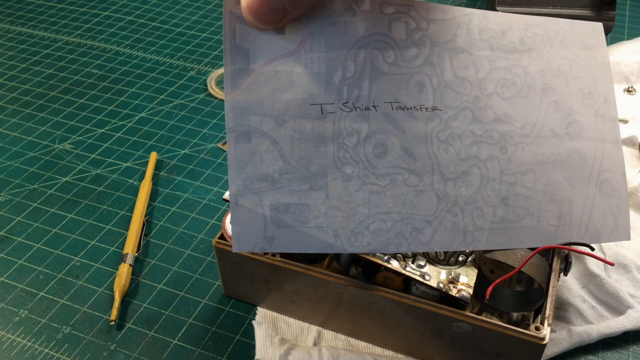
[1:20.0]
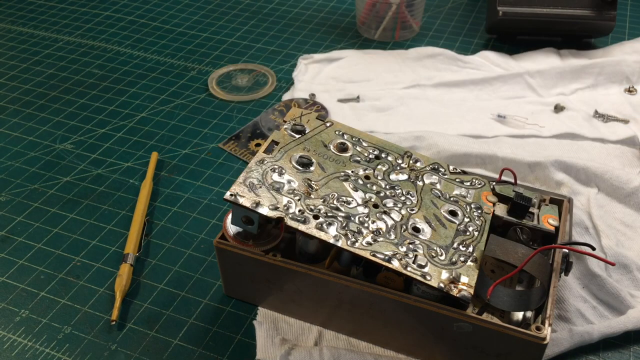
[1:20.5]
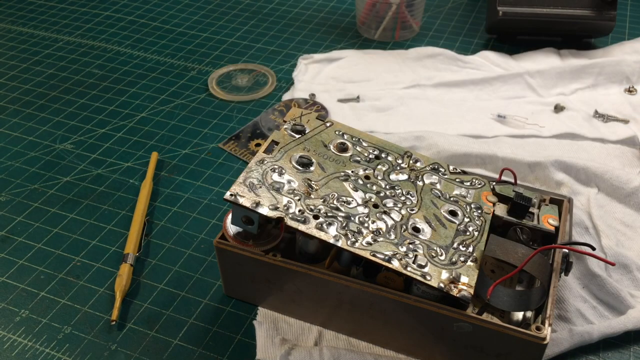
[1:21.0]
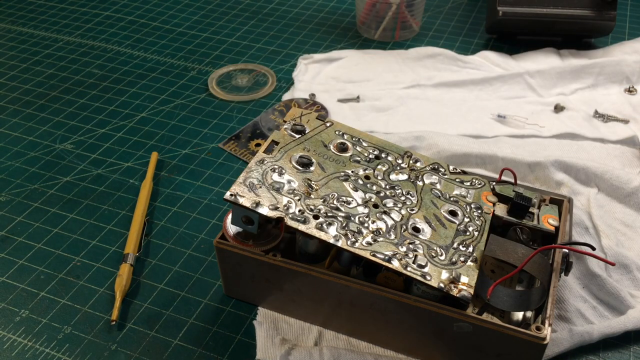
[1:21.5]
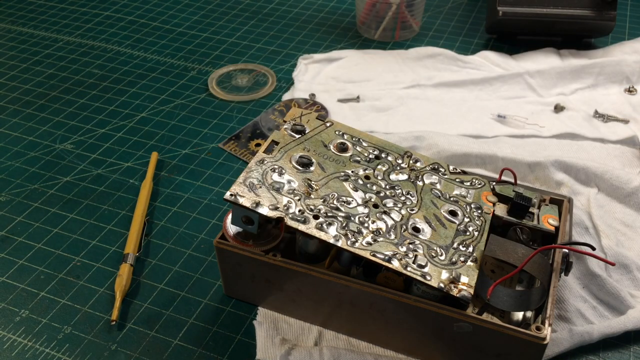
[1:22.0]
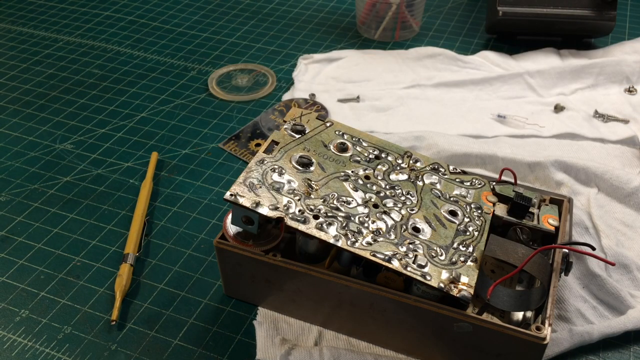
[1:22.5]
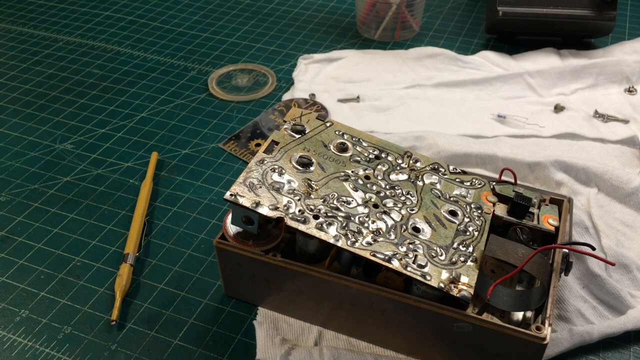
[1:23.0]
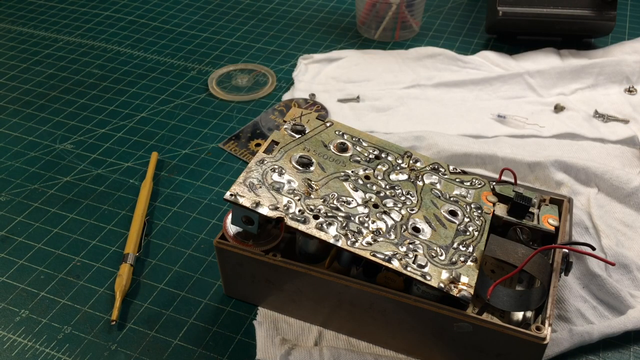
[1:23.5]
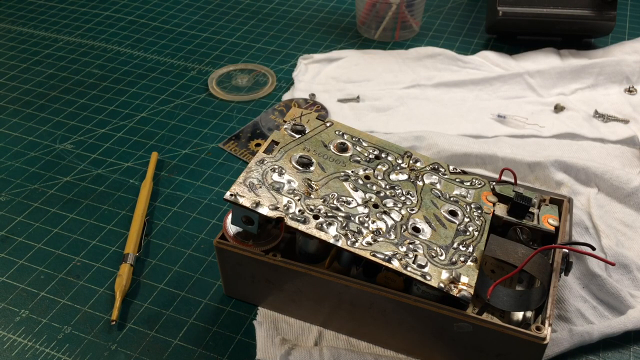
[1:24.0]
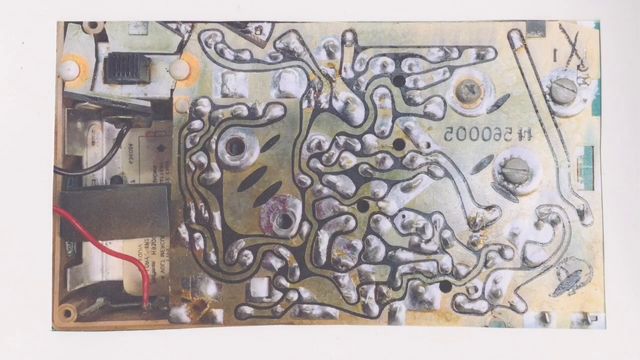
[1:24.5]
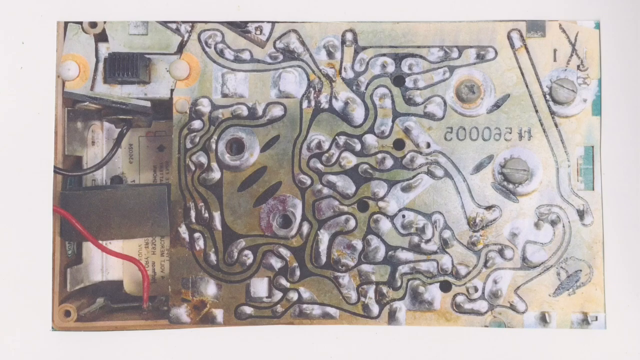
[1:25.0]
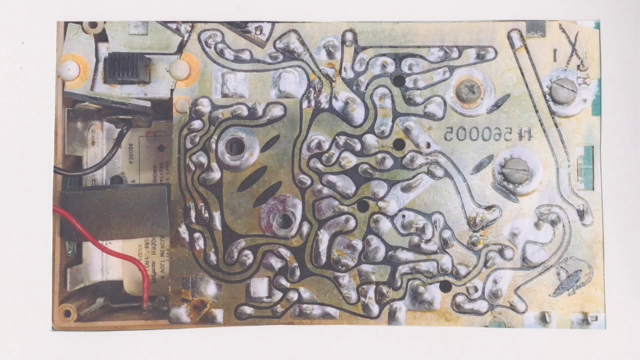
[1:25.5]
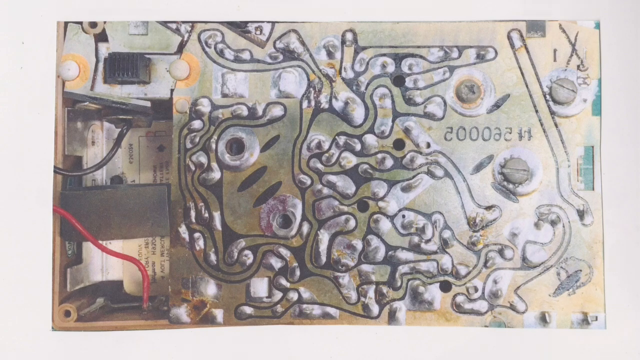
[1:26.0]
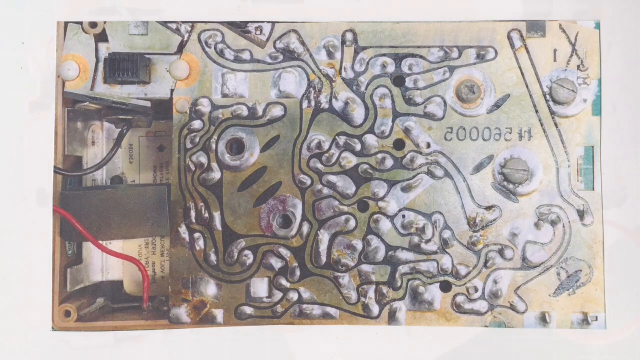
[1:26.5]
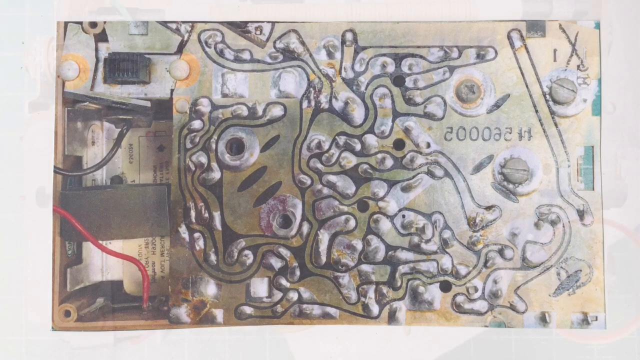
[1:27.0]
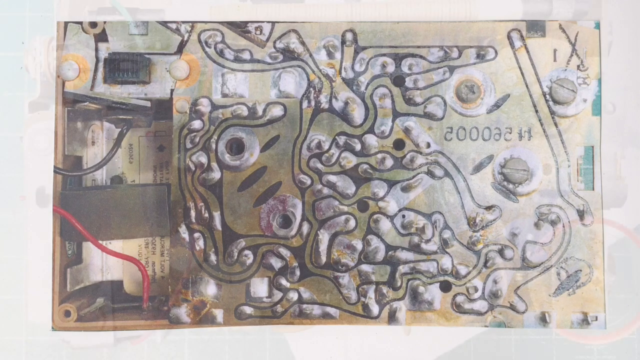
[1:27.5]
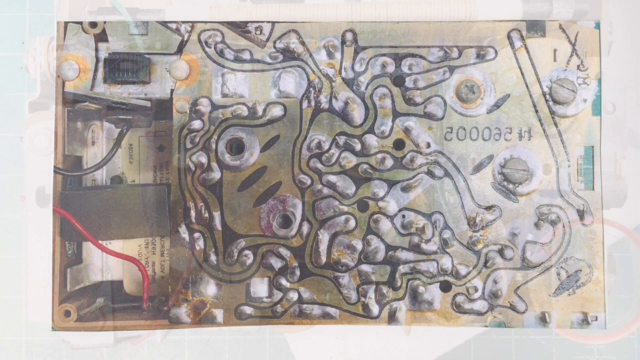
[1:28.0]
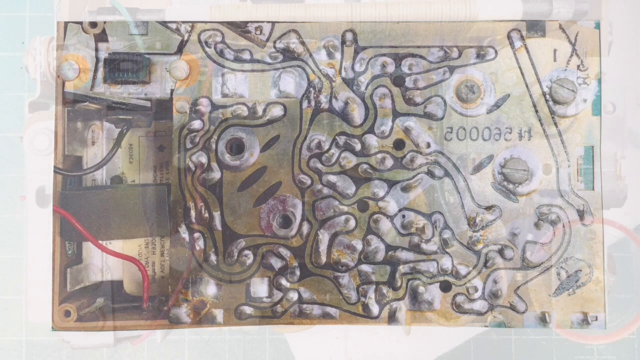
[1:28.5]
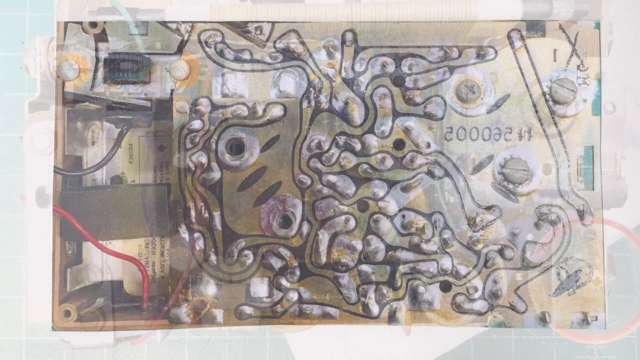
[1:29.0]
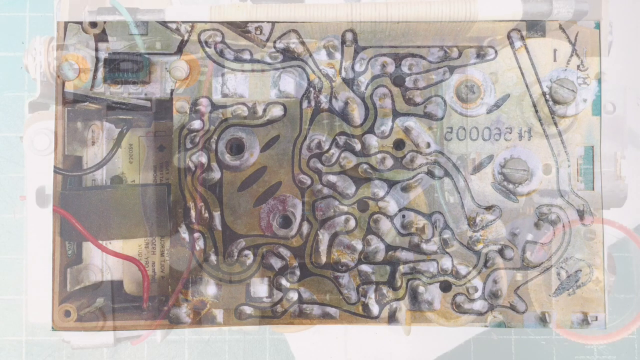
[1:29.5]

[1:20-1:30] Back in the first view, the metal sheet is on the radio, a yellow tool is in the background on the green board, and the white sheet with screws is visible. The view then switches to the top view again, showing the metal board with metal wiring. Nothing happens and the person does nothing; the two views are static, like photos. The mechanical structure seems to look like typical radio or speaker mechanics, has some numbers on it, and seems pretty old and a bit rusty. There are also some wires on the bottom of the radio.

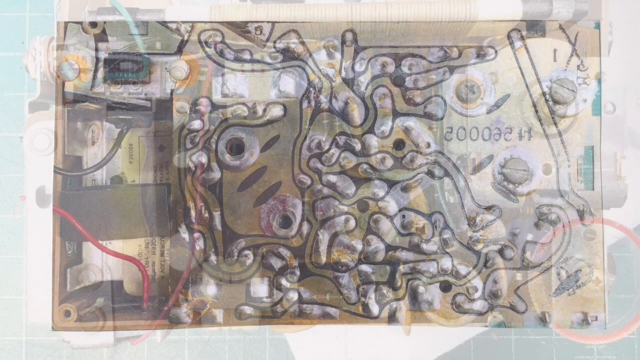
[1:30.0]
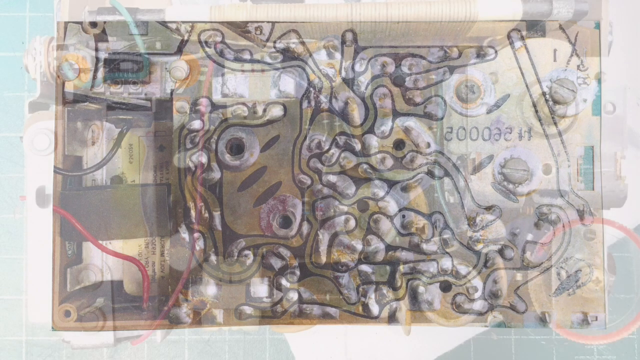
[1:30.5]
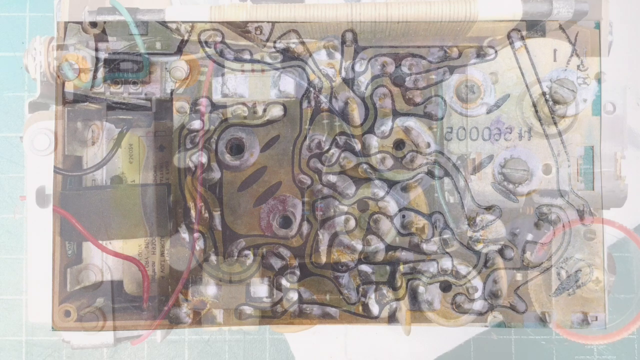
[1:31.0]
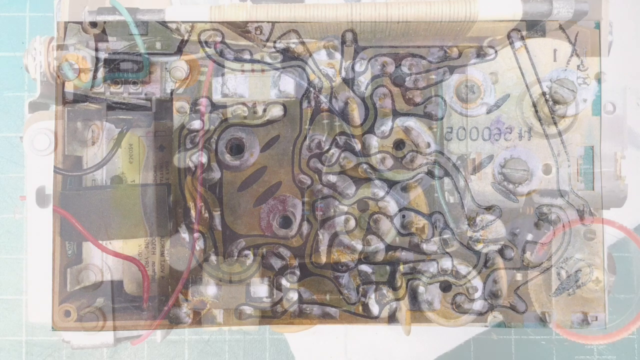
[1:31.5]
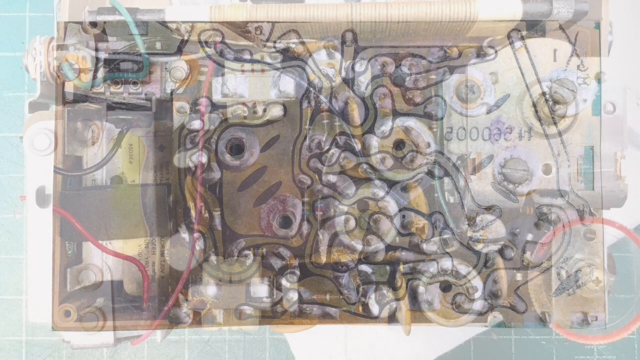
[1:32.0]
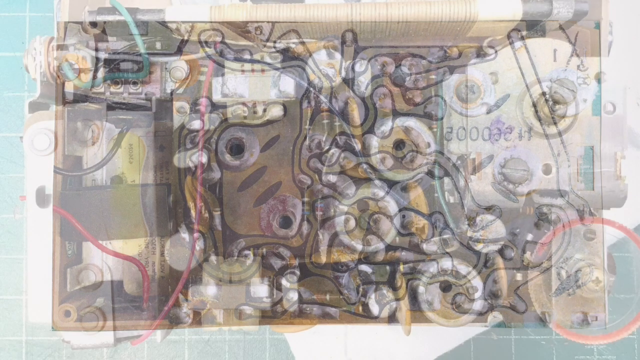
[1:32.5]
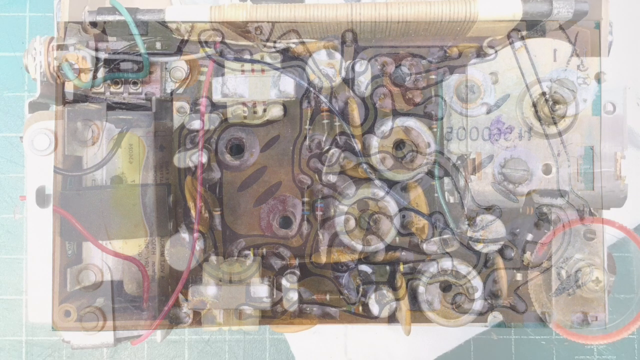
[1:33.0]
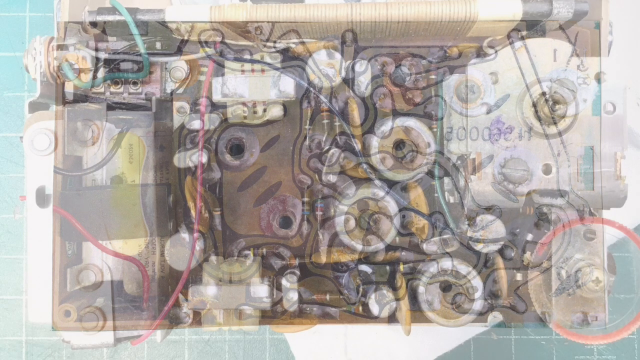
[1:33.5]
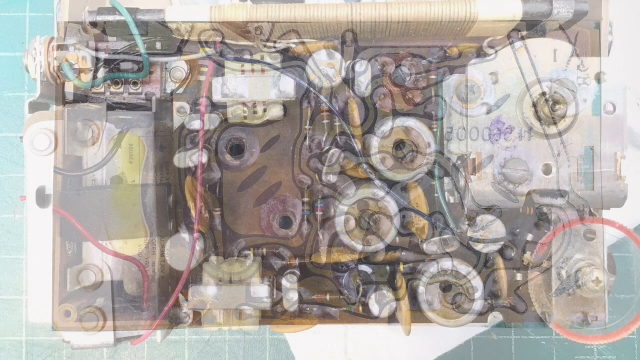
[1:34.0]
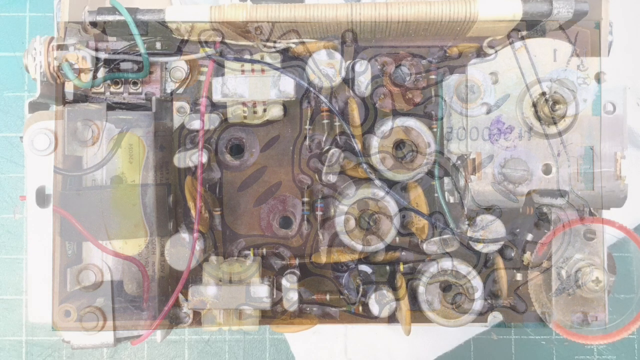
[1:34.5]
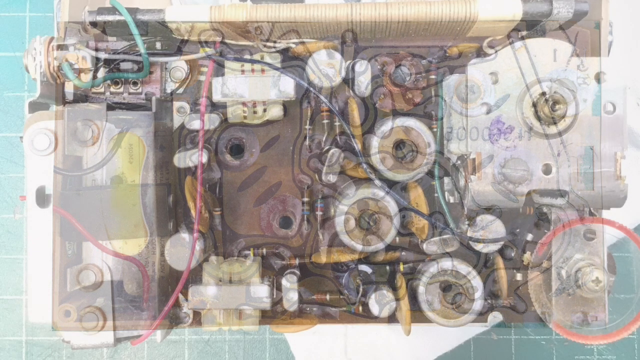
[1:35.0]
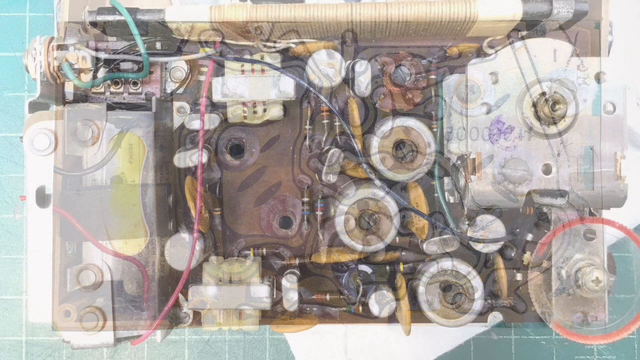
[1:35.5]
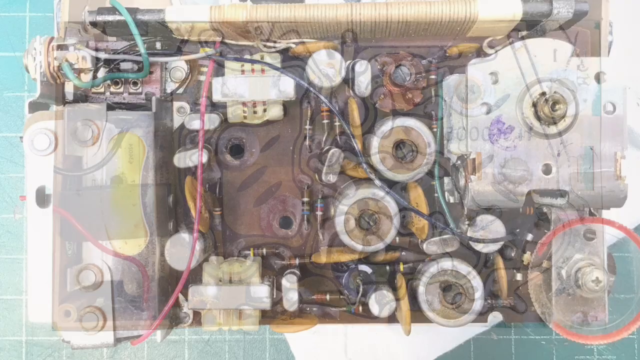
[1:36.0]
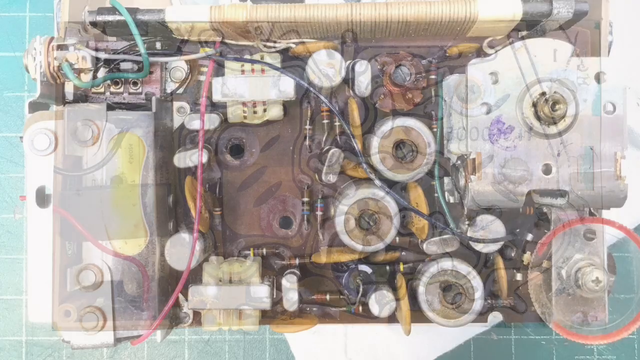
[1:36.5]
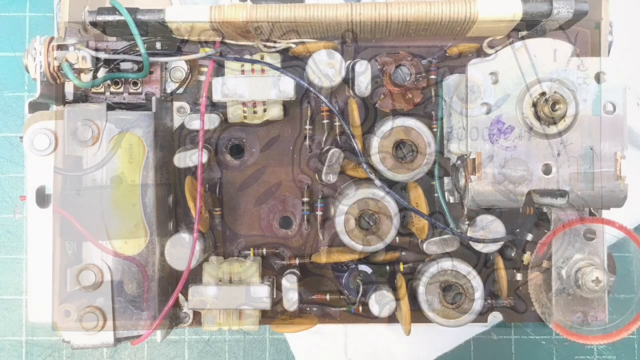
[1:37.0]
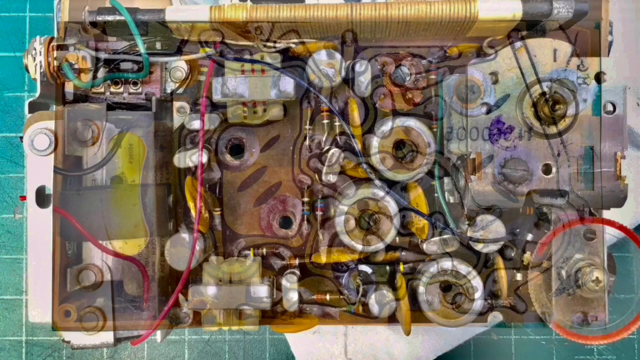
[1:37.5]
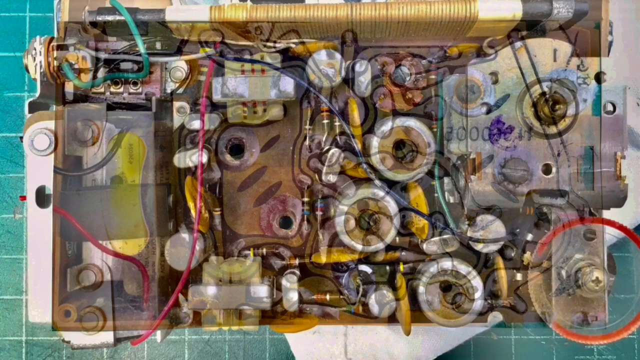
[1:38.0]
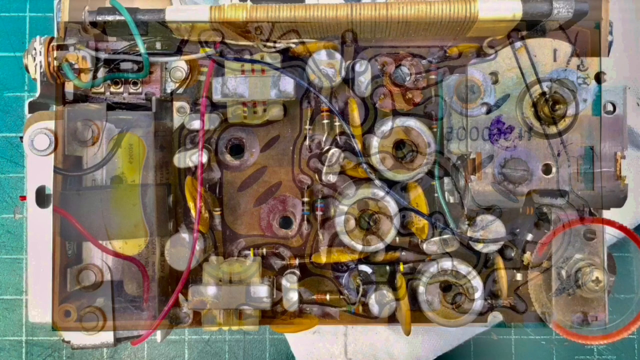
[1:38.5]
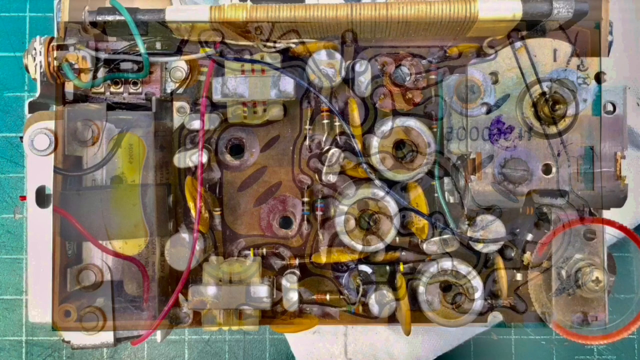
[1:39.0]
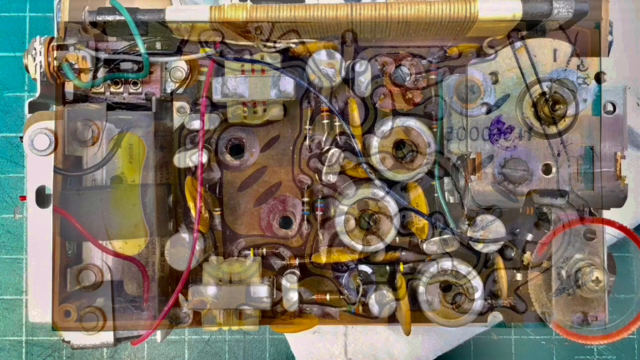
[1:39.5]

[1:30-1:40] The upside-down view of the radio is very blurry and little can be seen. The picture clears up for a moment, apparently showing a screw by a circle, possibly indicating the screw used to open the radio. The metal sheet is then removed, revealing the inside of the radio with various mechanical contraptions and wiring or electrical parts.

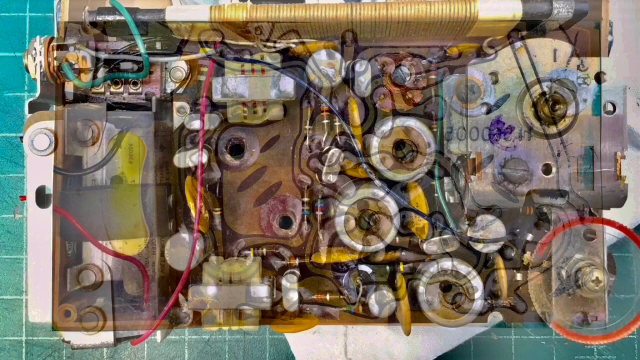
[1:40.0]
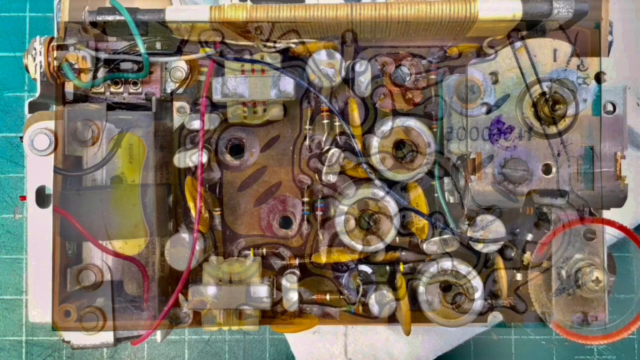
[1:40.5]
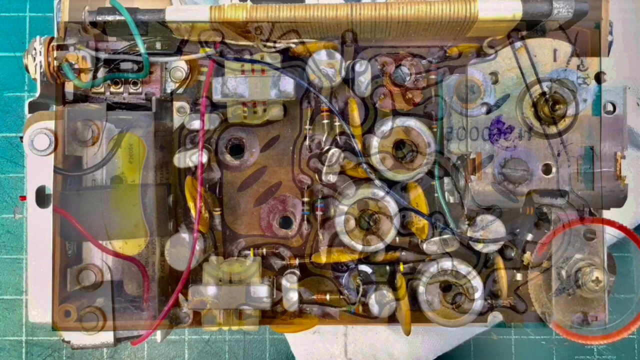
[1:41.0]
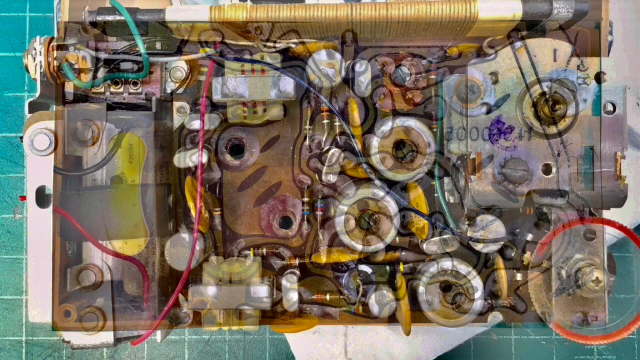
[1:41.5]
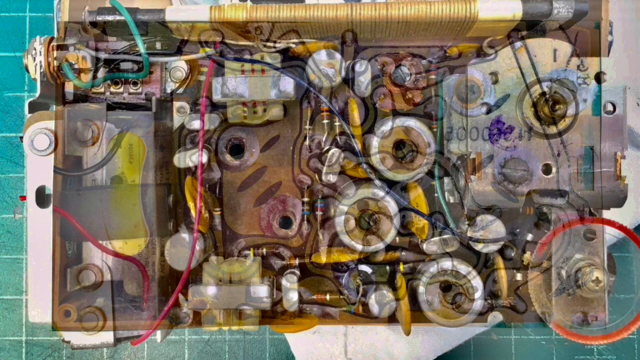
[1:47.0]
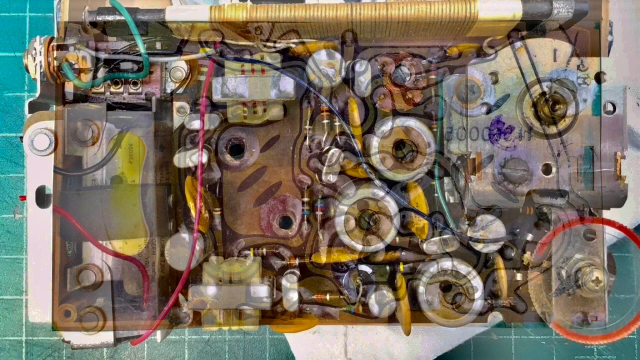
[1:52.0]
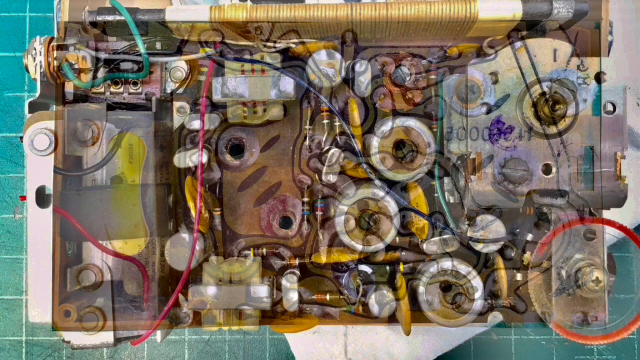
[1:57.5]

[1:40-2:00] The radio is shown opened up without the metal sheet, revealing various mechanical parts inside, including some oval and circular metal-colored pieces and a coil. The radio is still on the board, and the picture is static with nothing happening. A snippet of the white sheet is visible under the old radio; the sheet is possibly made of cotton or another soft material, while the board is a harder, solid material. The radio looks a bit old.